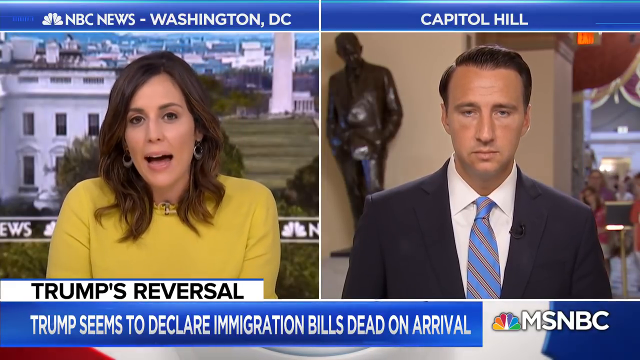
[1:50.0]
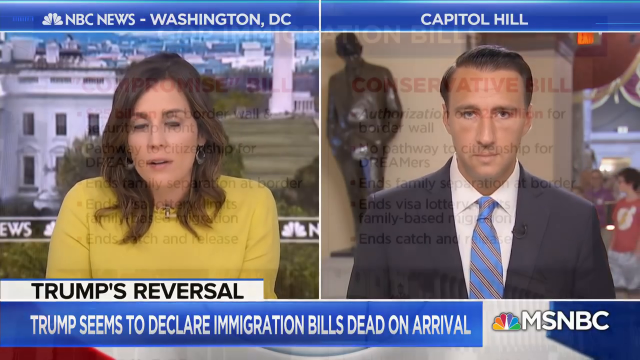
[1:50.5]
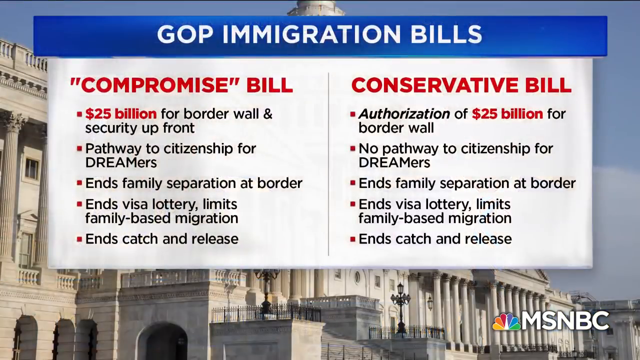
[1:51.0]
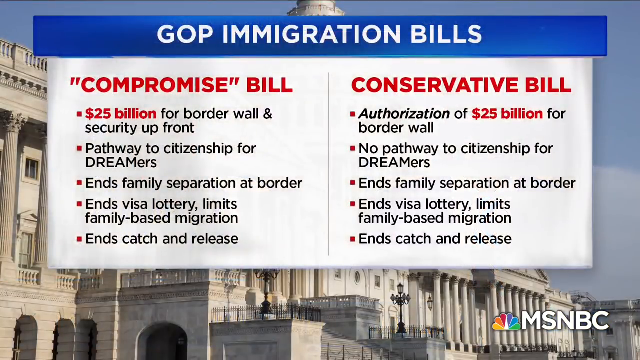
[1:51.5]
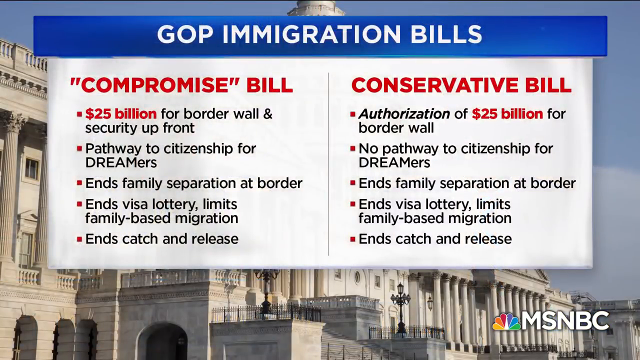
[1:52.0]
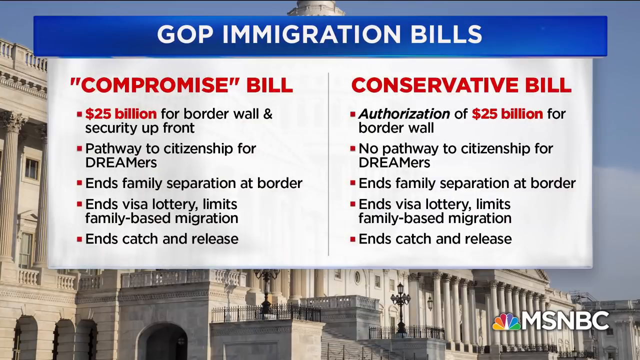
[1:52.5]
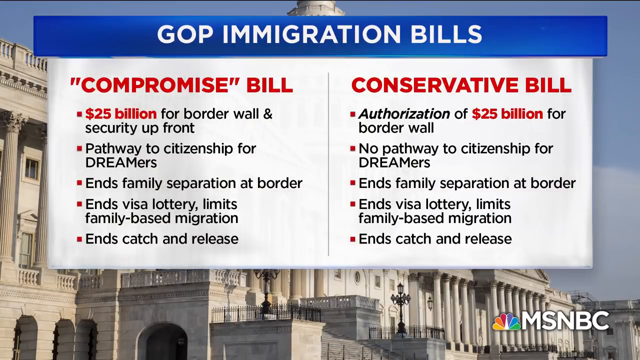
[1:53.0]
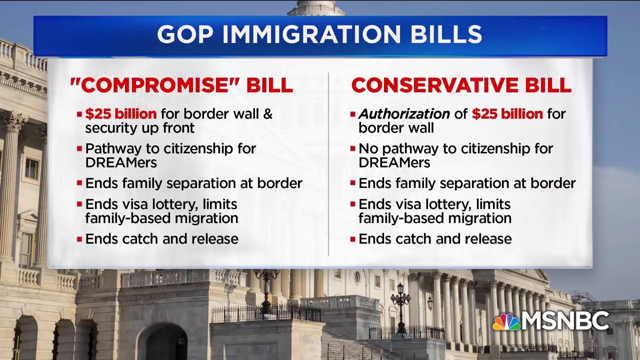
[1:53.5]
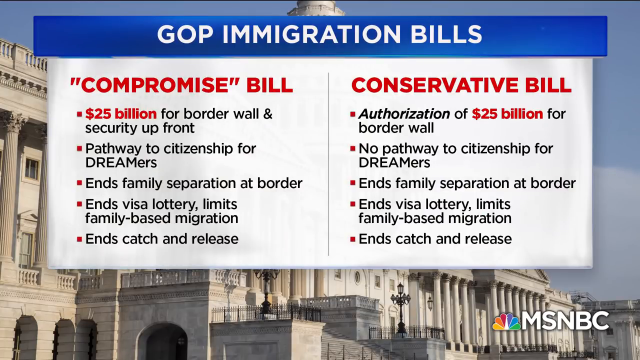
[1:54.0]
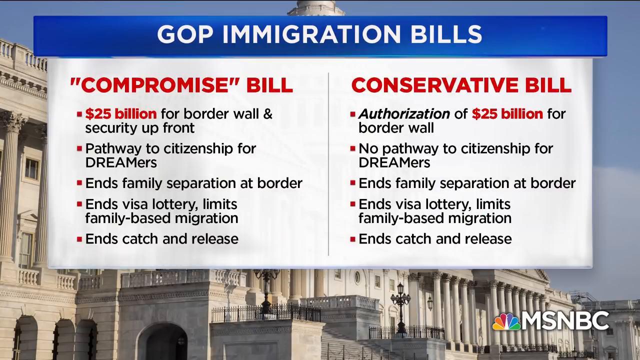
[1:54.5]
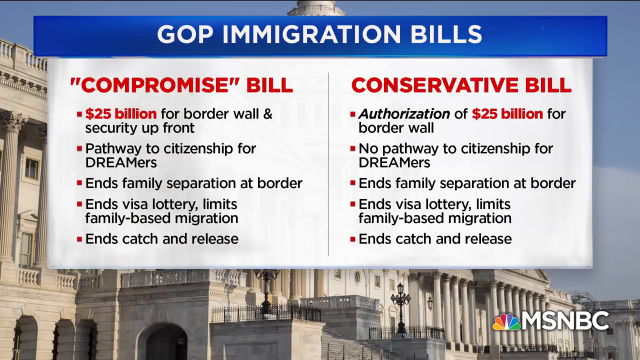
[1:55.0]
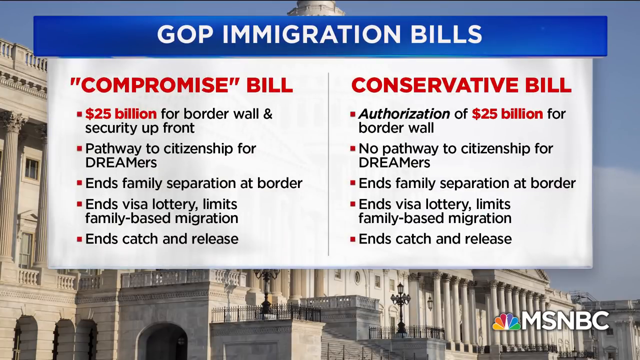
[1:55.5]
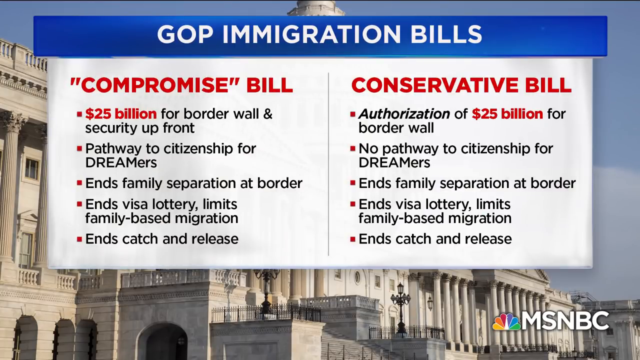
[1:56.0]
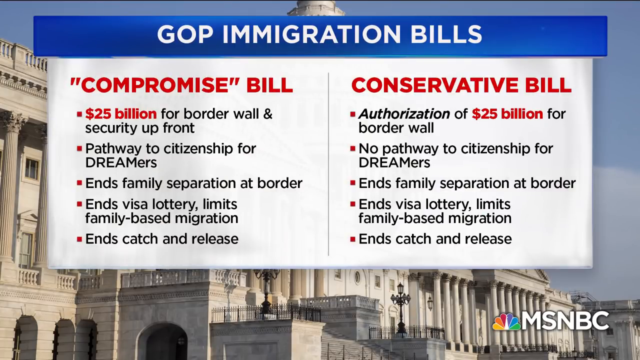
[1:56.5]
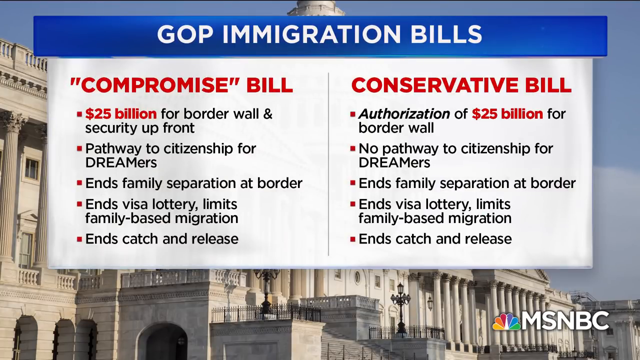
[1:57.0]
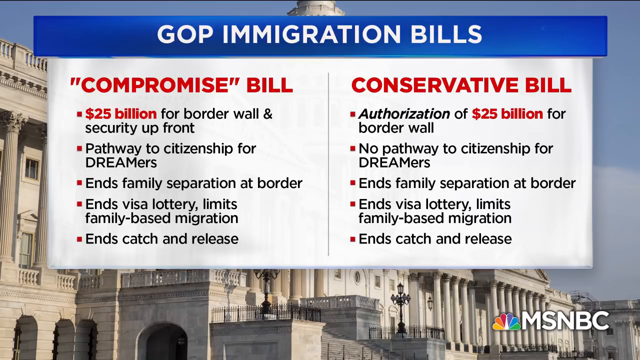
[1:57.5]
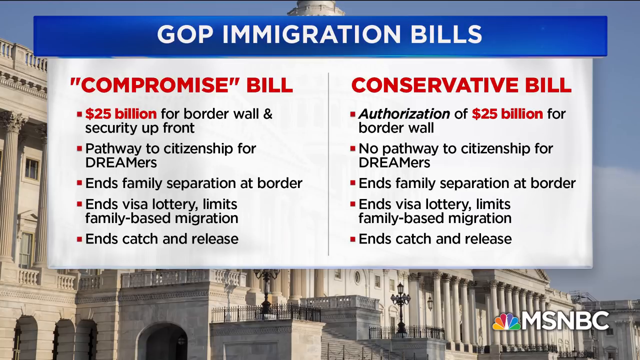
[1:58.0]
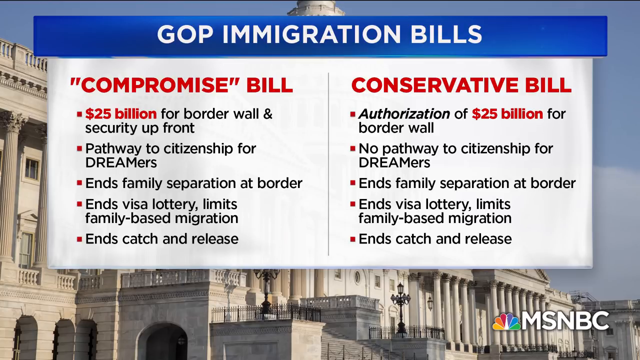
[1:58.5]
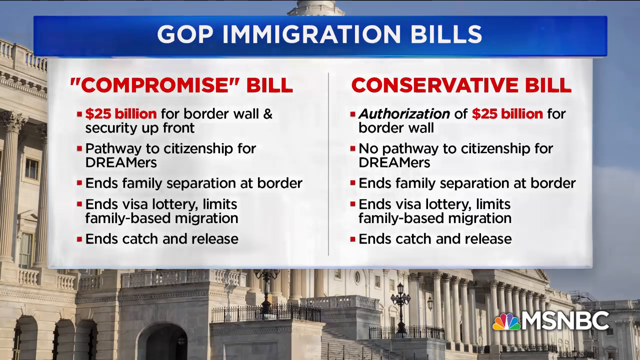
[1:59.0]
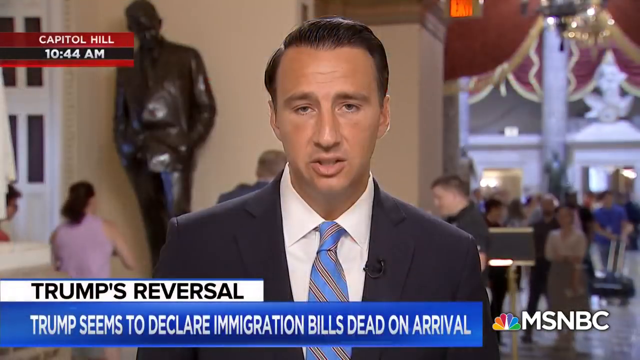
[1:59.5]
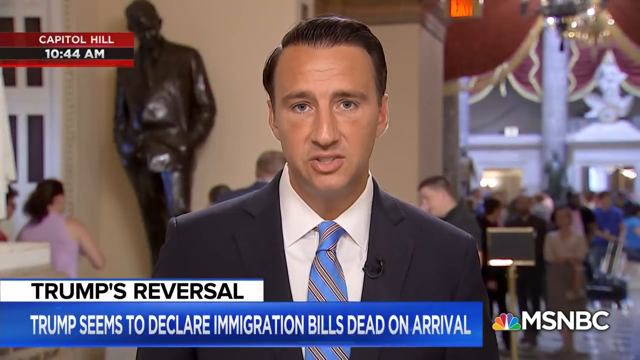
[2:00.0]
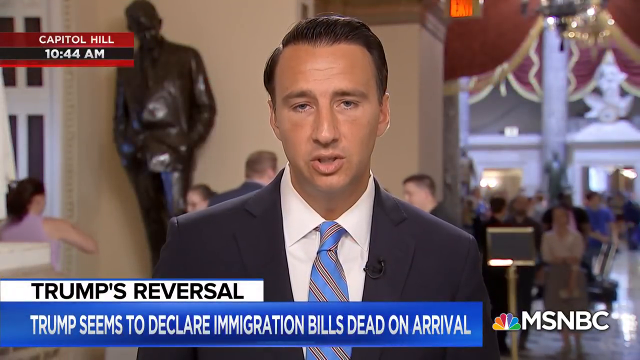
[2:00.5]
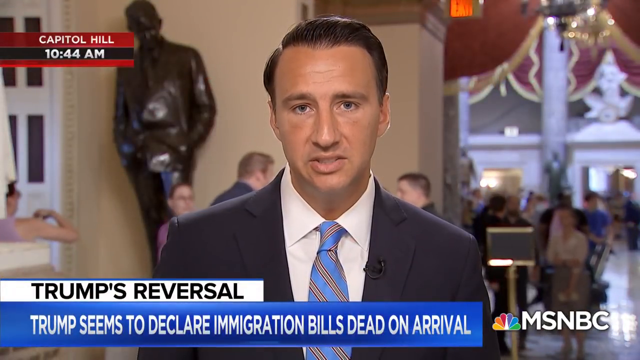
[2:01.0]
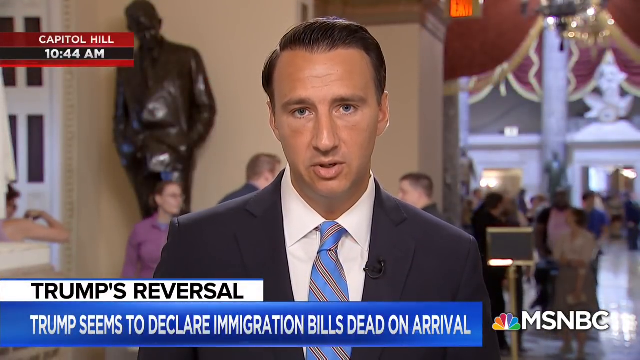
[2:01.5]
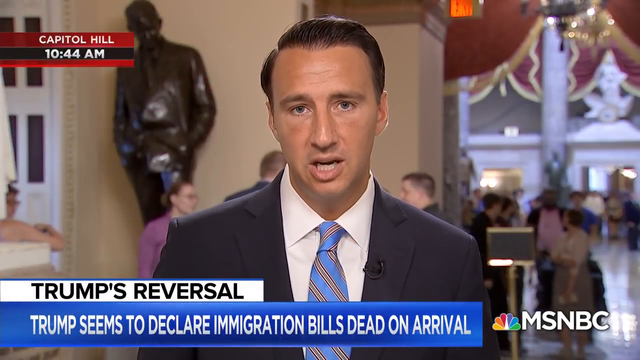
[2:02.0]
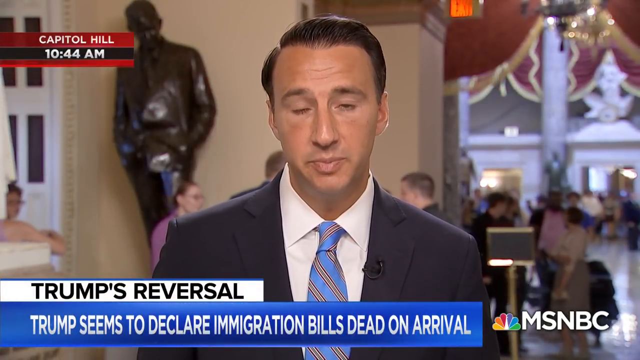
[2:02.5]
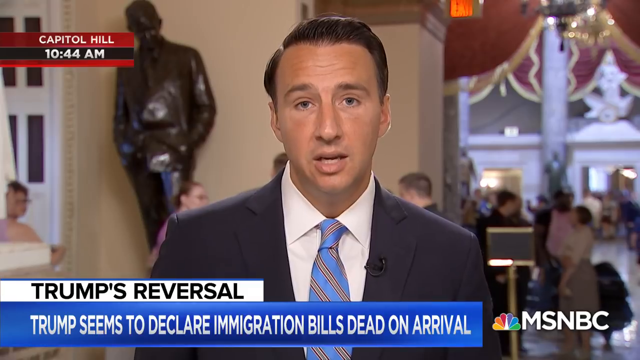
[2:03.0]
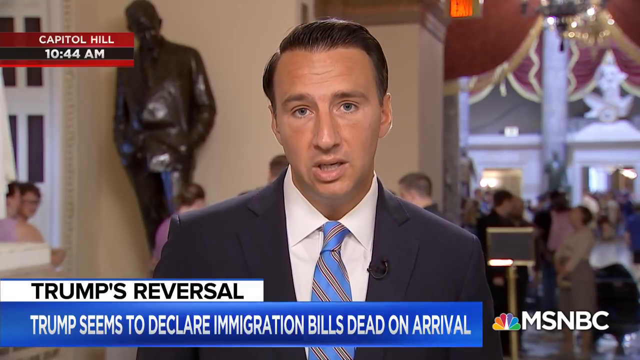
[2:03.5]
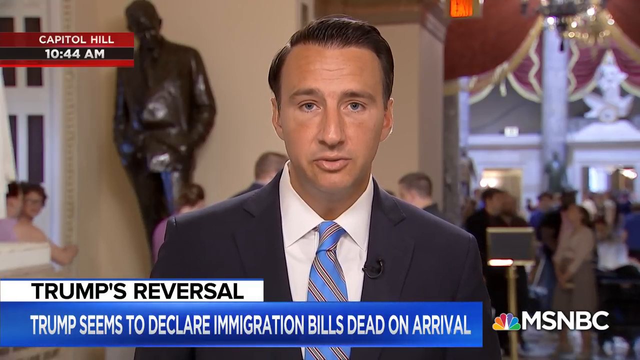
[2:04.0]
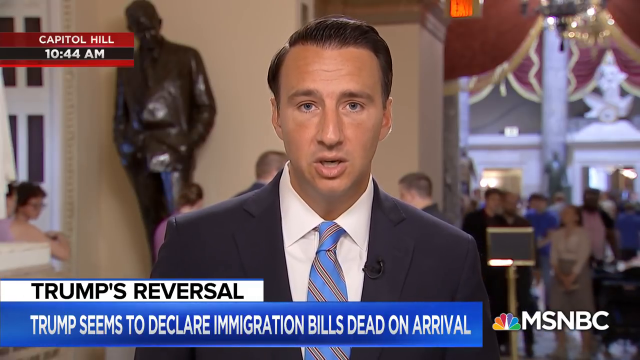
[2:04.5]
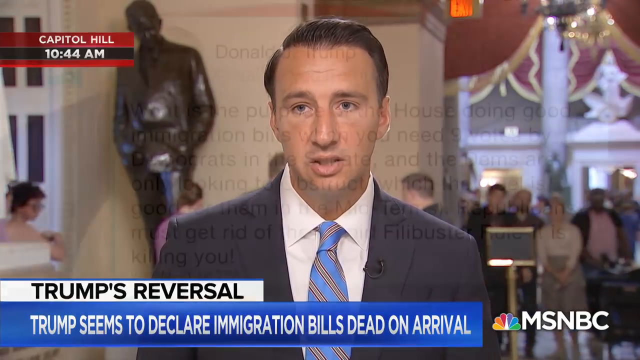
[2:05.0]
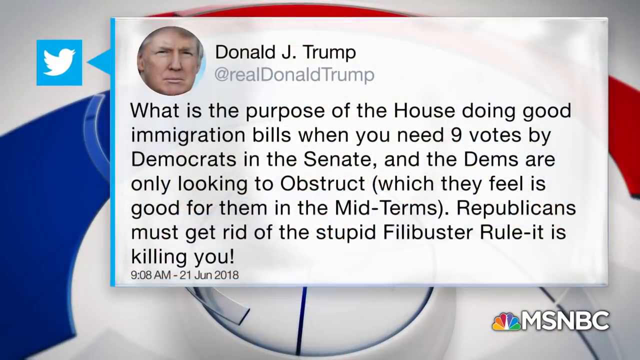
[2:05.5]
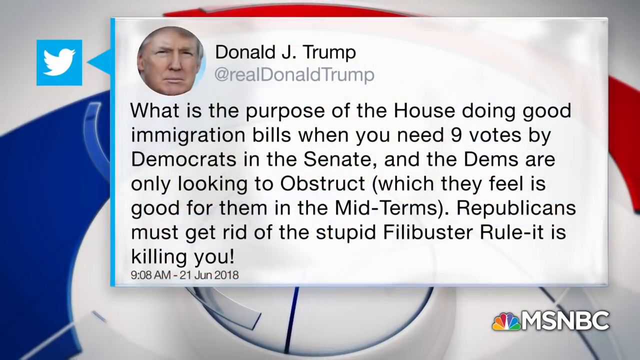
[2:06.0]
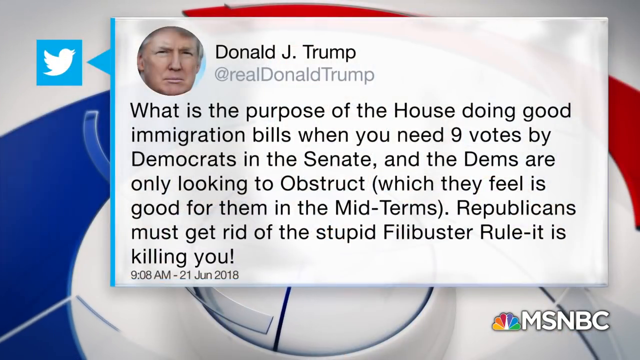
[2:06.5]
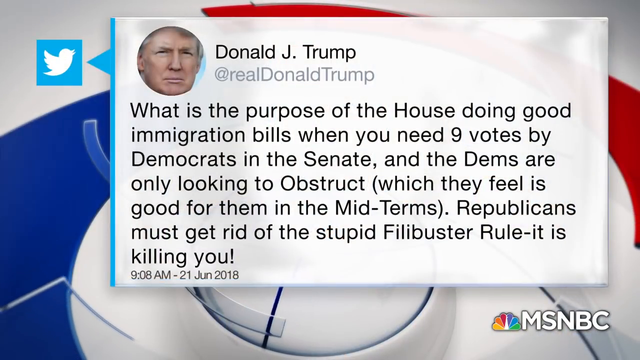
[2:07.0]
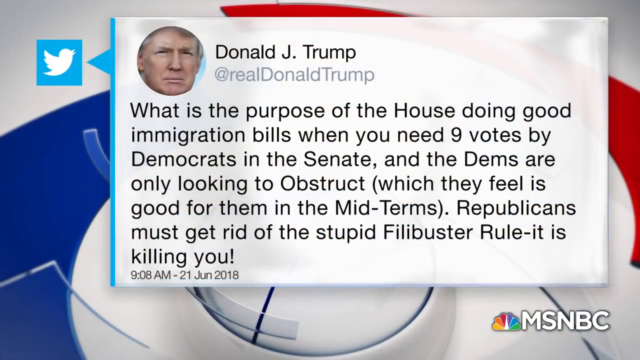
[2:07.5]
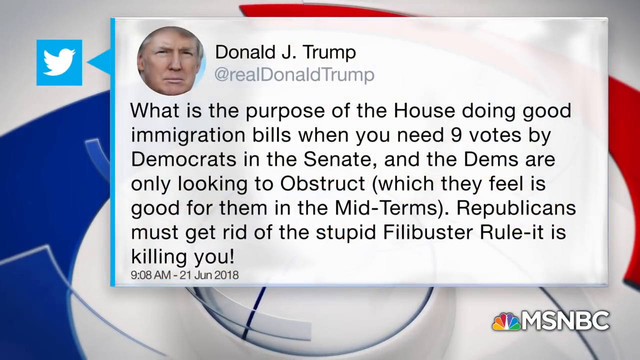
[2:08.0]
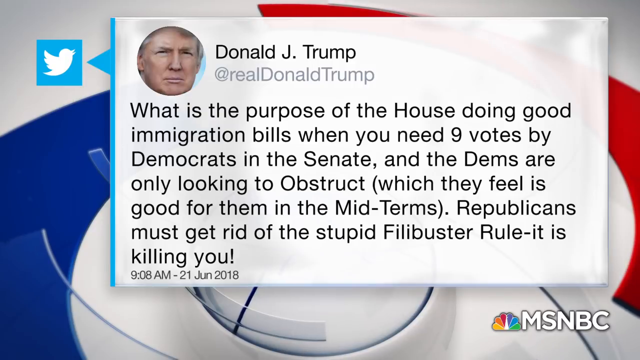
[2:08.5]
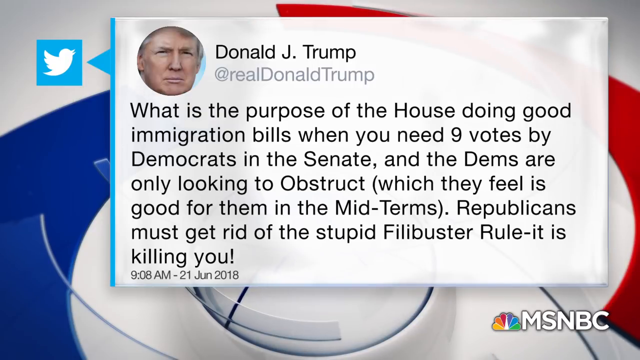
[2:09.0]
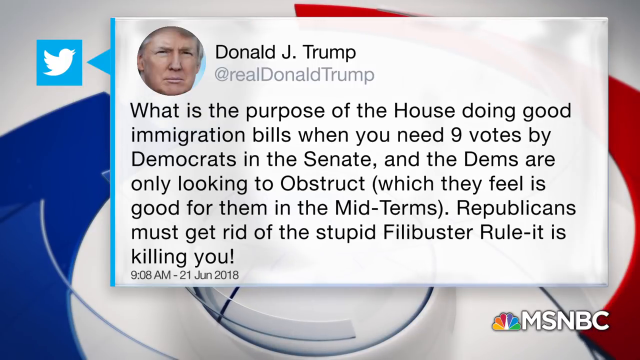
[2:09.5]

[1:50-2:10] The news host Hallie Jackson is speaking, and a graphic comes up: a blue title bar with white text, a white body with subheadings in red text and black text beside square bullet points, split into two columns and superimposed over an image that looks like the Capitol. The left column, "Compromise Bill", lists "$25 billion for border wall and security up front", "pathway to citizenship for Dreamers", "ends family separation at border", "ends visa lottery limits family-based migration" and "ends catch and release". The right column, "Conservative Bill", lists "authorization of $25 billion for border wall", "no pathway to citizenship for Dreamers", and, like the compromise bill, ending family separation at the border, ending the visa lottery and limiting family-based migration, and ending catch and release. The video goes back to Representative Costello talking, and another graphic comes up showing a tweet from Trump: "What is the purpose of the House doing good immigration bills when you need nine votes by Democrats in the Senate and the Dems are only looking to obstruct (which they feel is good for them in the midterms). Republicans must get rid of the stupid filibuster rule. It is killing you." Its time and date stamp is 9:08 AM, 21 June 2018.